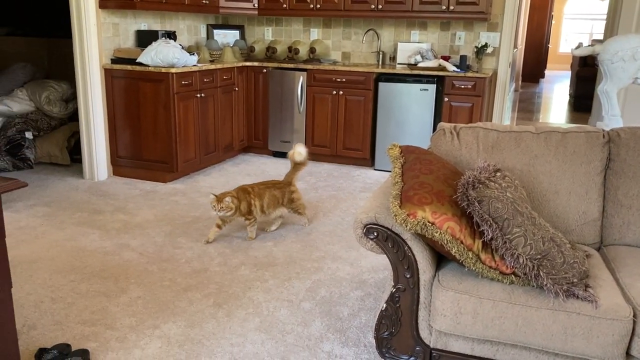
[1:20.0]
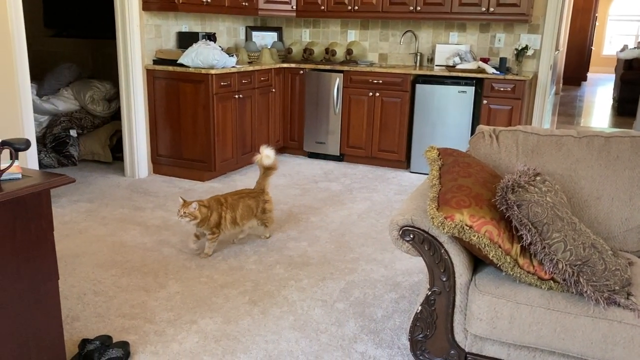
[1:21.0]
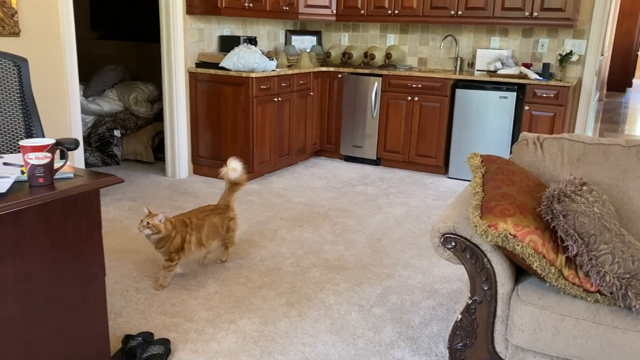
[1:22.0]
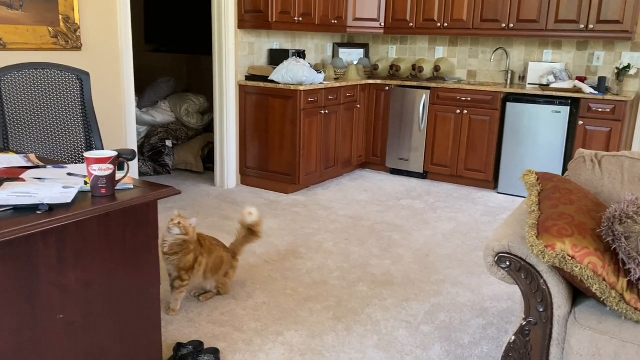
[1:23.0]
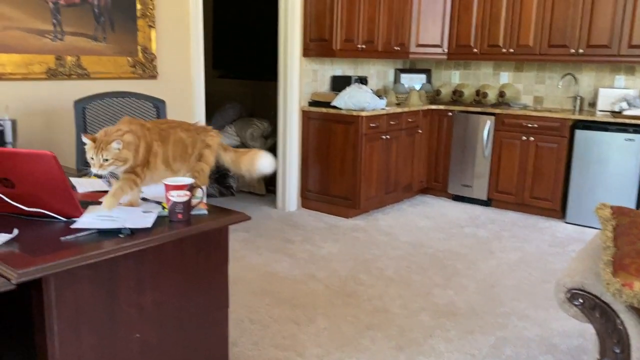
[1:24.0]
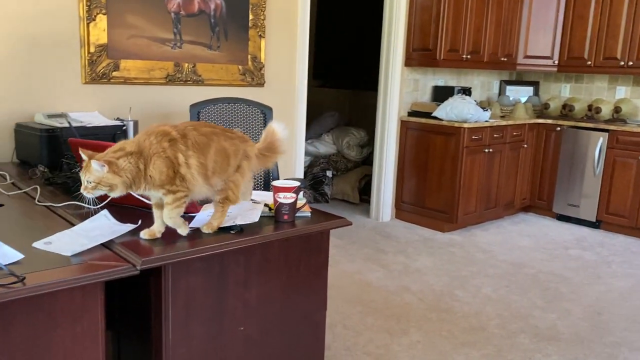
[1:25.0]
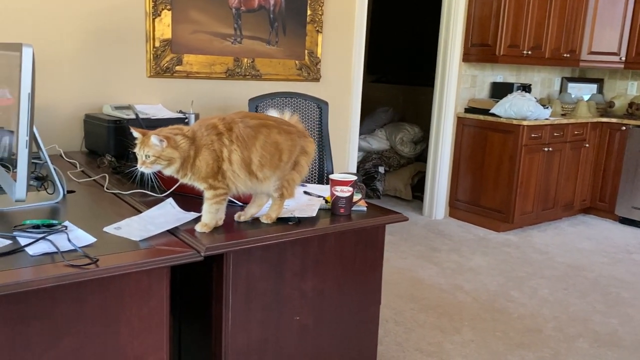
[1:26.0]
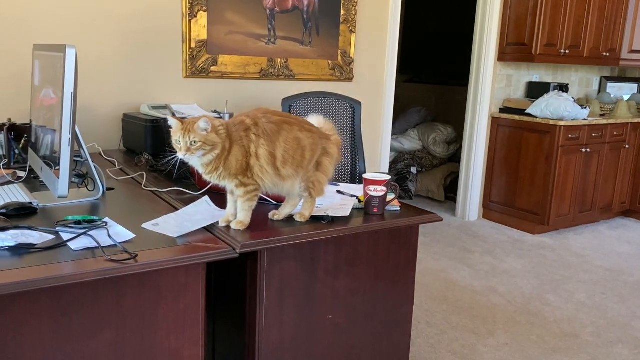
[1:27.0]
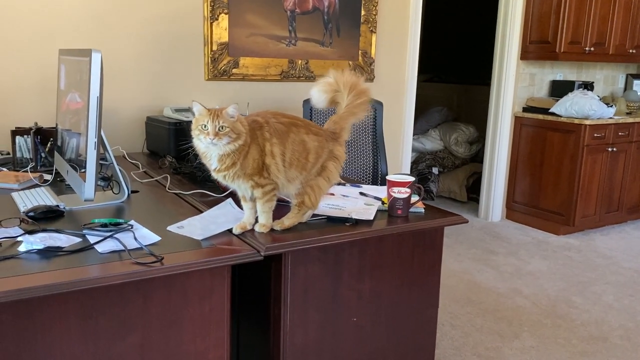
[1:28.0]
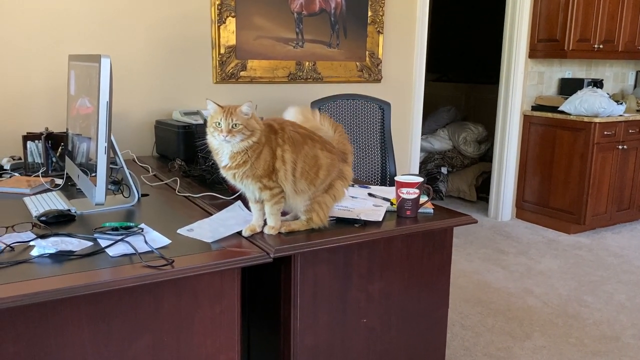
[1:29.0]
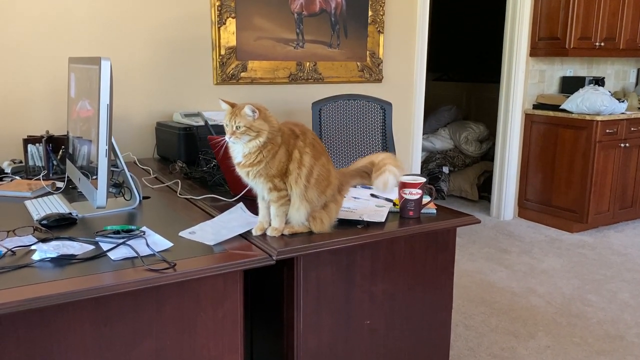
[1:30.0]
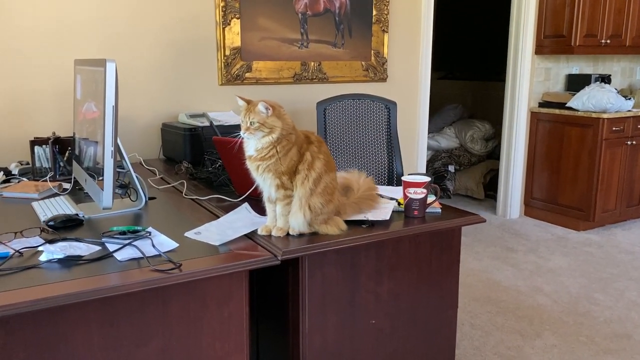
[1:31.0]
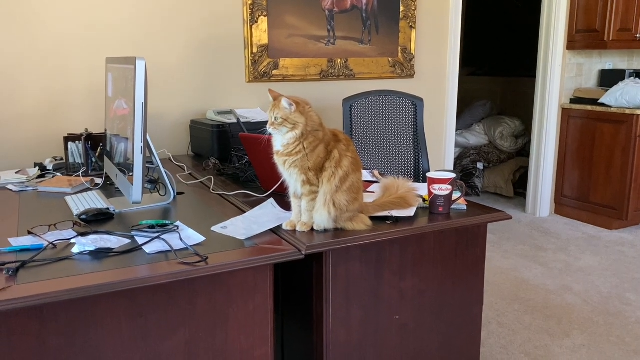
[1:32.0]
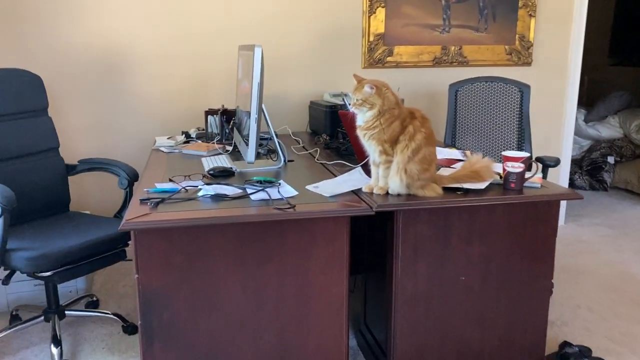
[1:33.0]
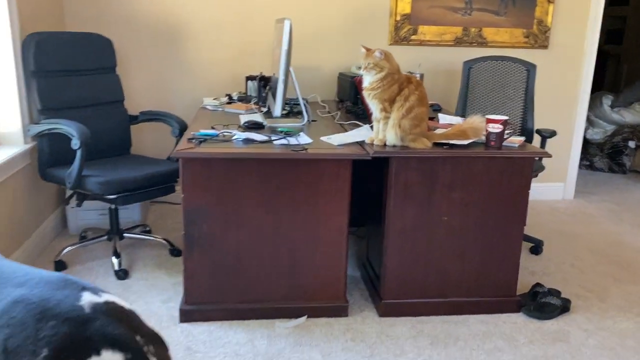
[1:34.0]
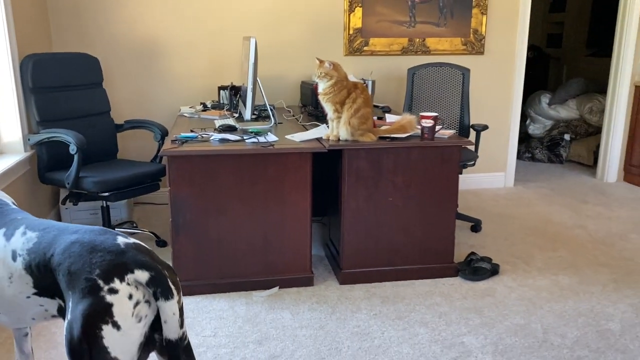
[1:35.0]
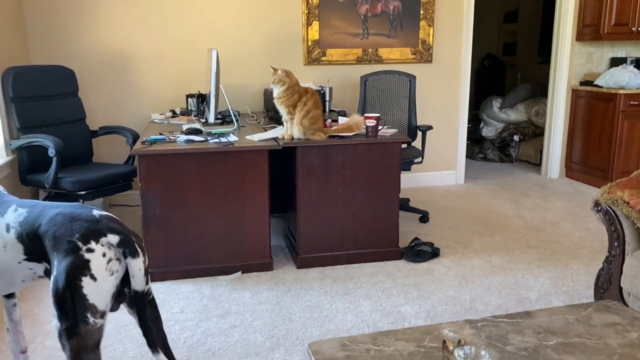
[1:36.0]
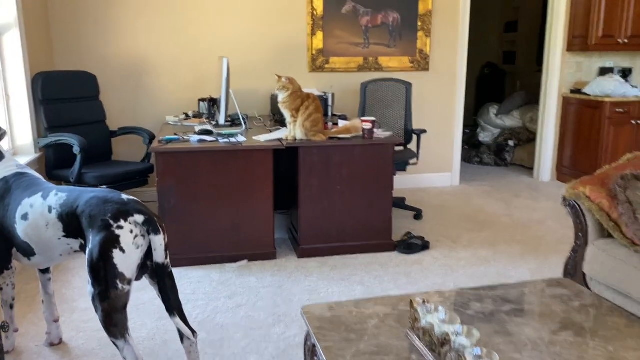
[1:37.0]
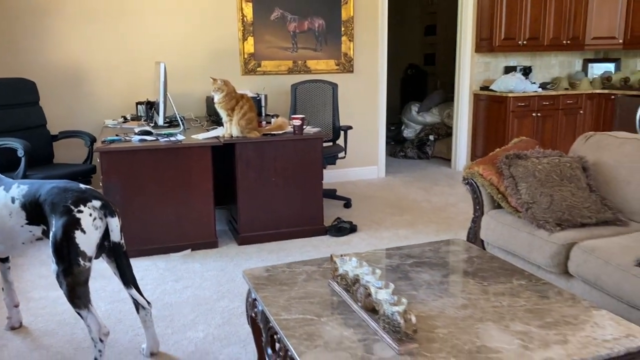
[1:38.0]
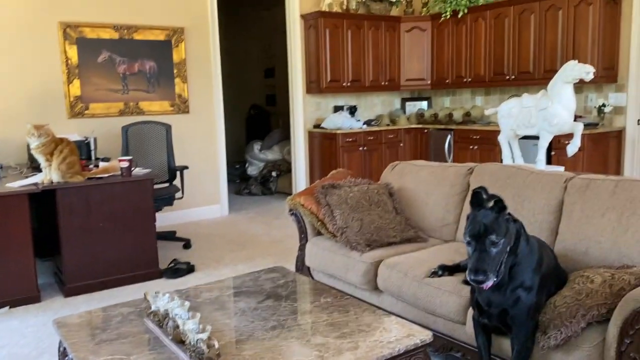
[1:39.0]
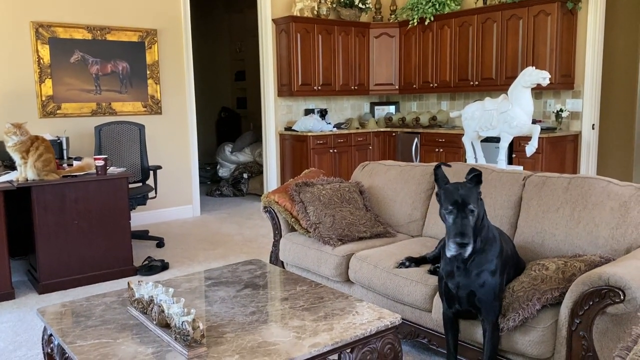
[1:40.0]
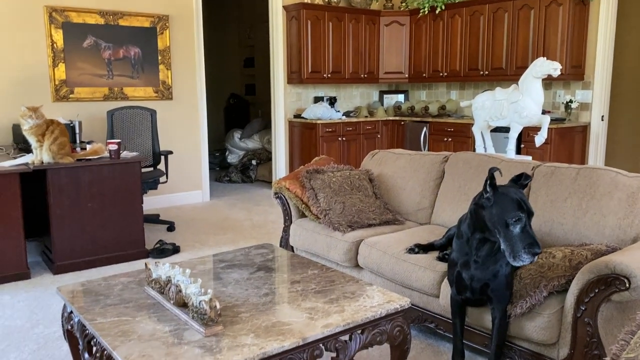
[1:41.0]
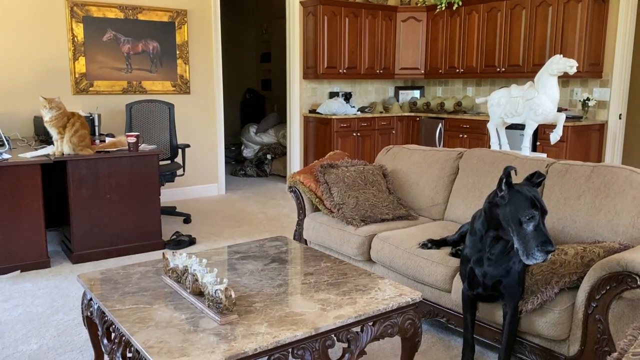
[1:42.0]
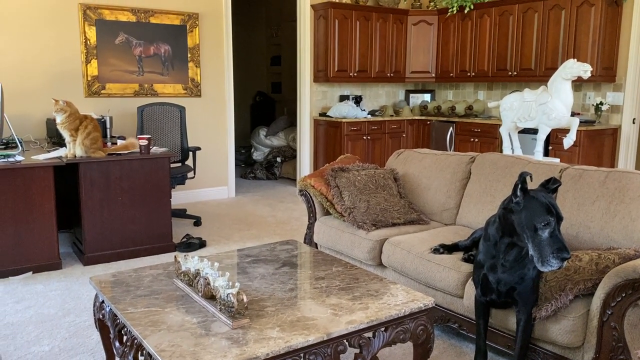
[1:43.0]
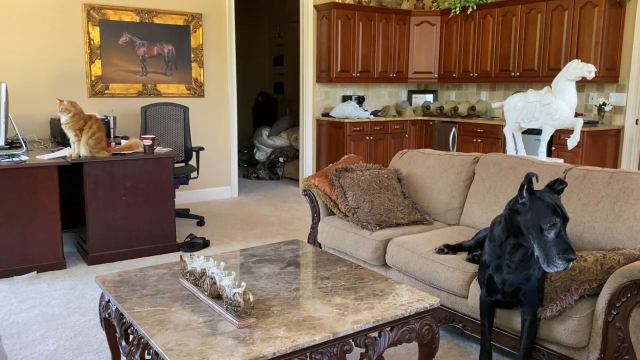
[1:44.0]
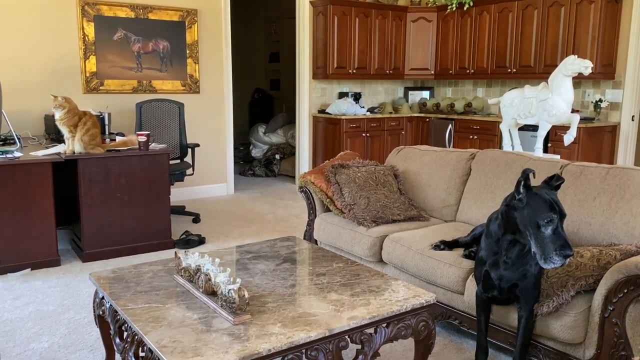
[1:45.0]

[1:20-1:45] The cat walks with its tail up in the air and looks to be in a friendly mood. The kitchen the cat is in front of has a small fridge, a dishwasher and minimal counter space. The cat jumps up on top of the desk with the computers on it, walks across the crumpled and disorganized papers and past a coffee cup, then sits down, moving its tail back and forth in the air. The person then walks back and shows the dog looking out the window as well as the dog resting partially off the couch. There is a horse statue inside the house that looks to be made of marble. Next to the kitchen is an entryway to another room that looks to have lots of folded blankets and pillows inside.